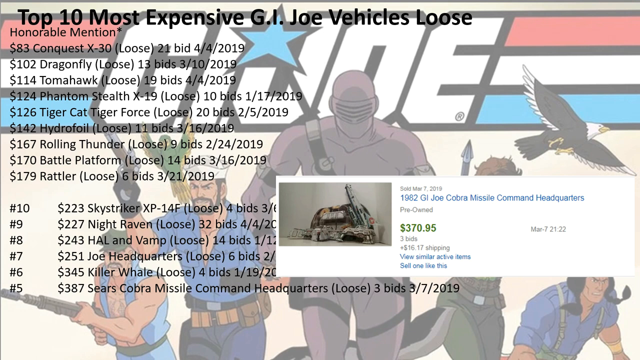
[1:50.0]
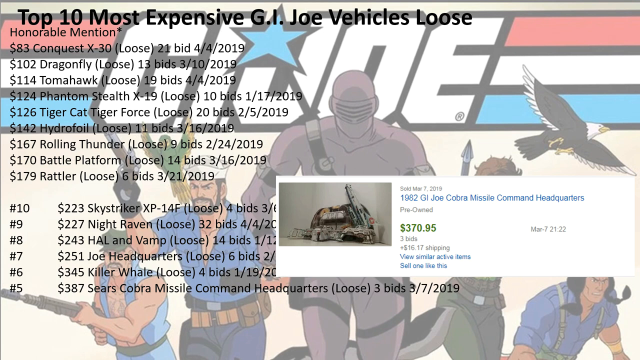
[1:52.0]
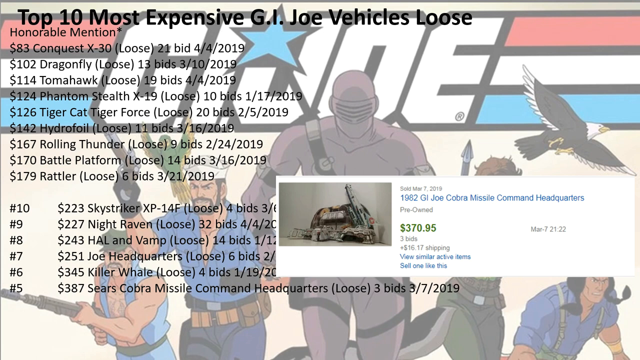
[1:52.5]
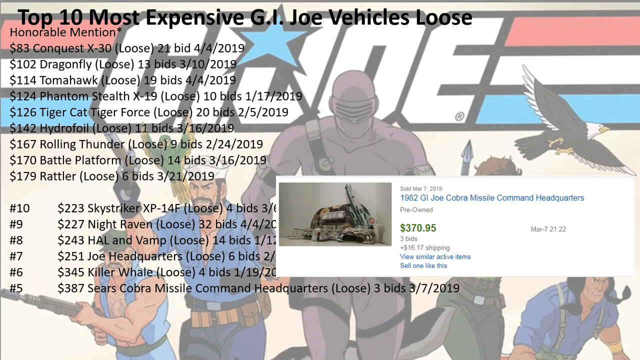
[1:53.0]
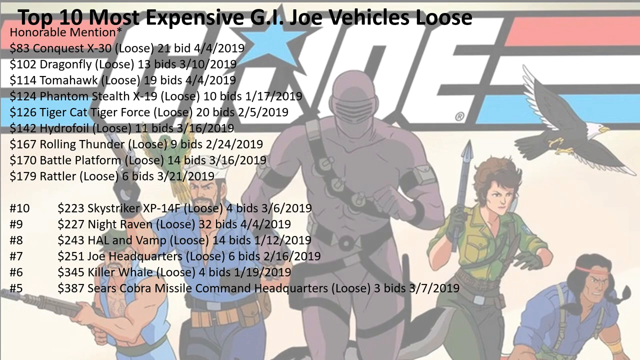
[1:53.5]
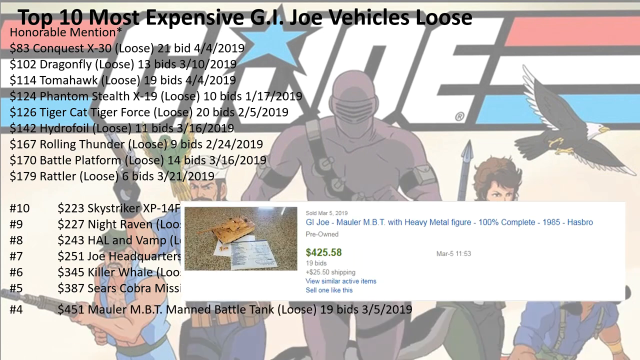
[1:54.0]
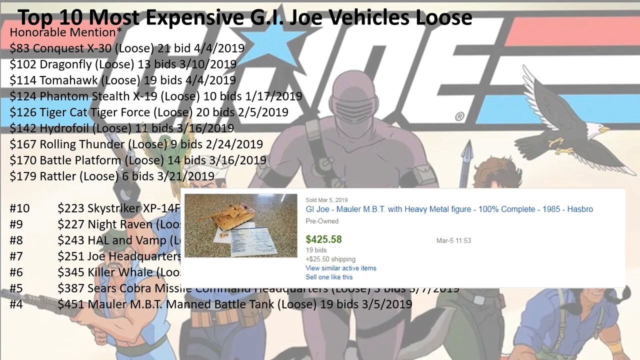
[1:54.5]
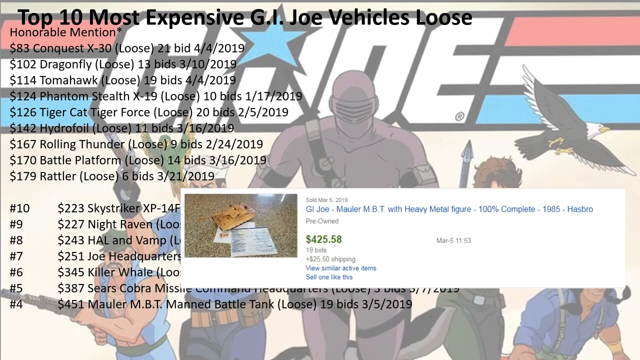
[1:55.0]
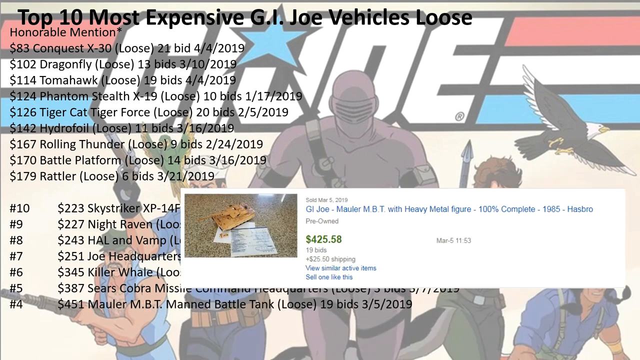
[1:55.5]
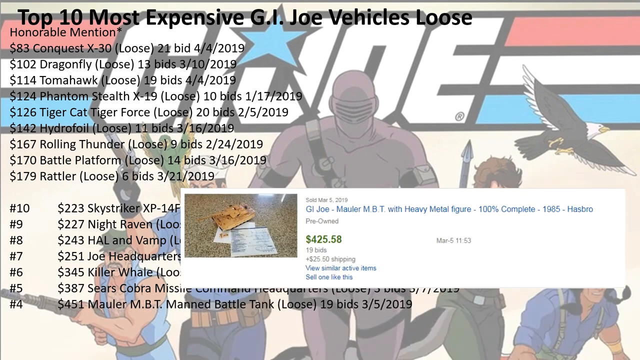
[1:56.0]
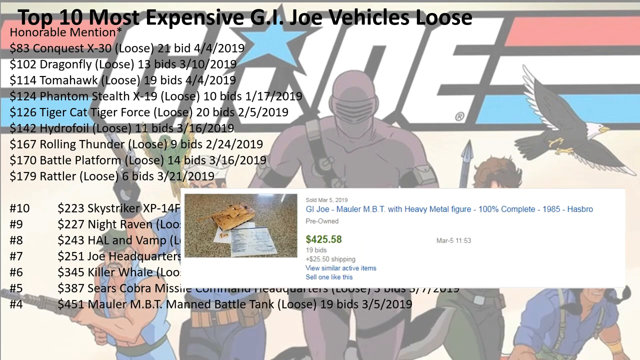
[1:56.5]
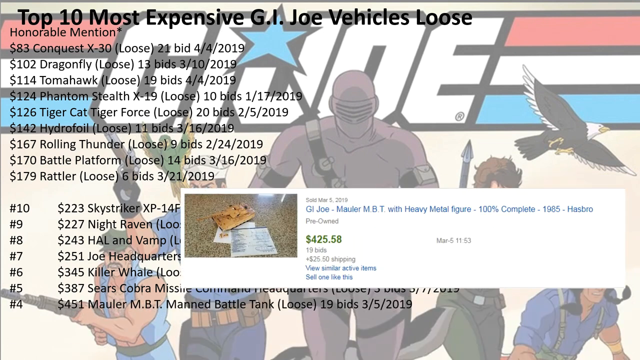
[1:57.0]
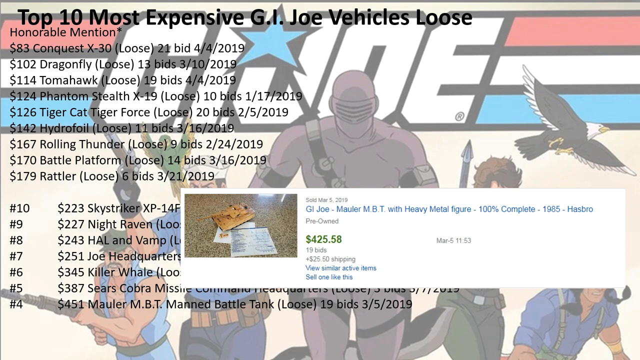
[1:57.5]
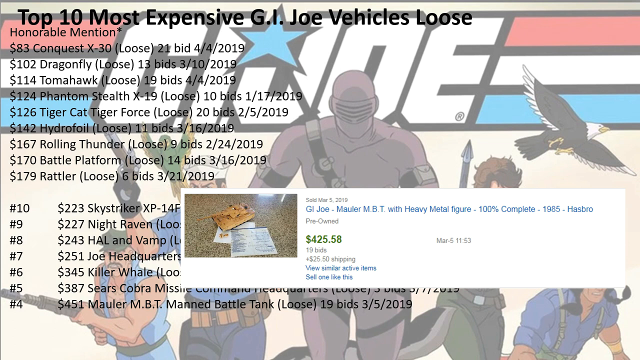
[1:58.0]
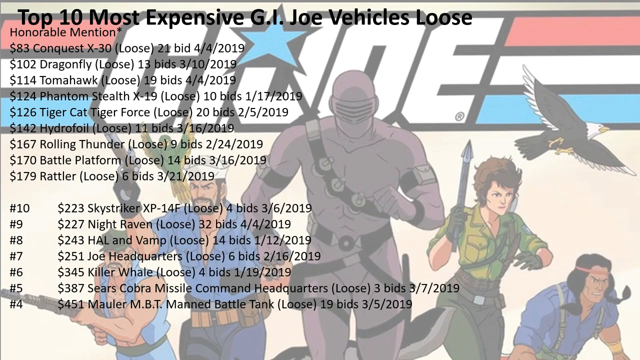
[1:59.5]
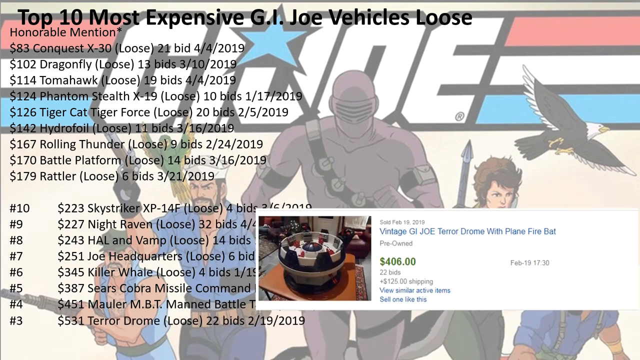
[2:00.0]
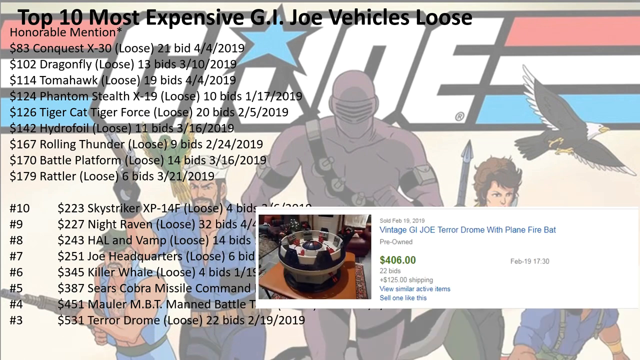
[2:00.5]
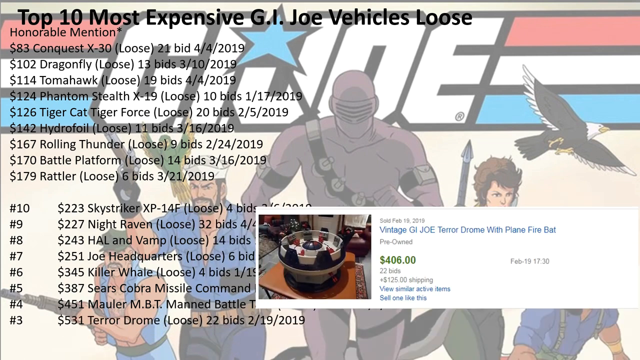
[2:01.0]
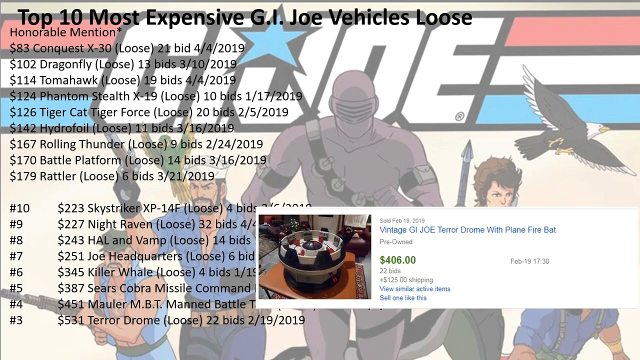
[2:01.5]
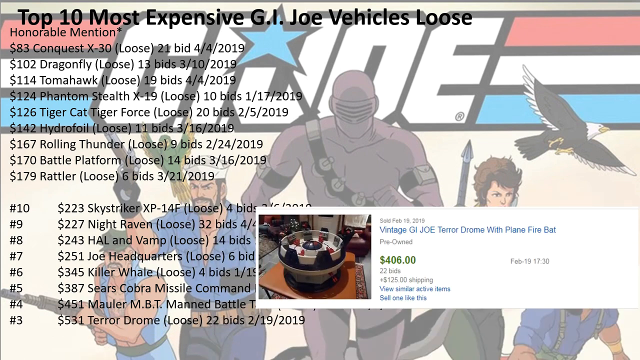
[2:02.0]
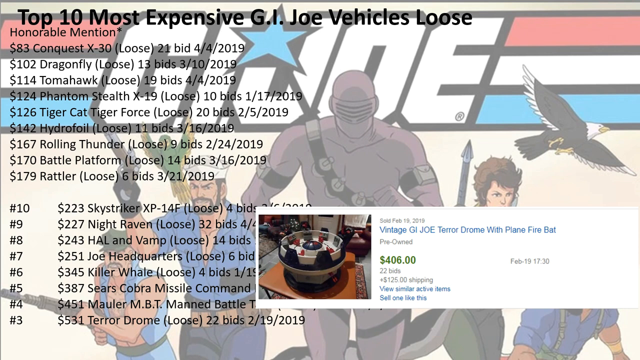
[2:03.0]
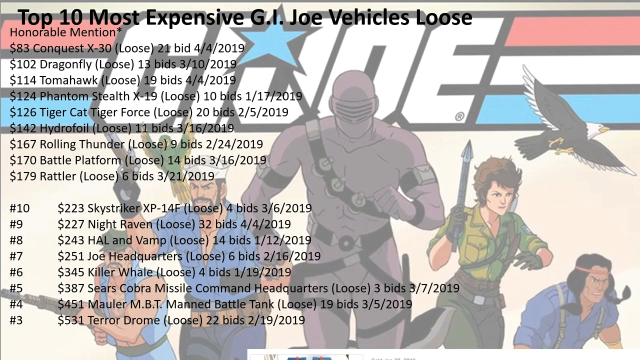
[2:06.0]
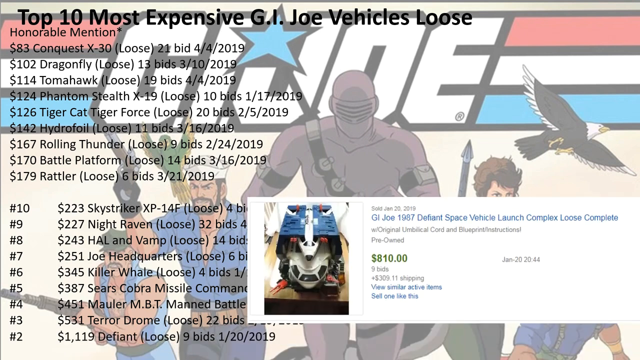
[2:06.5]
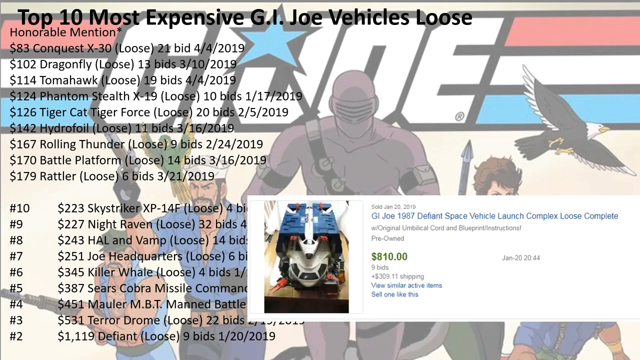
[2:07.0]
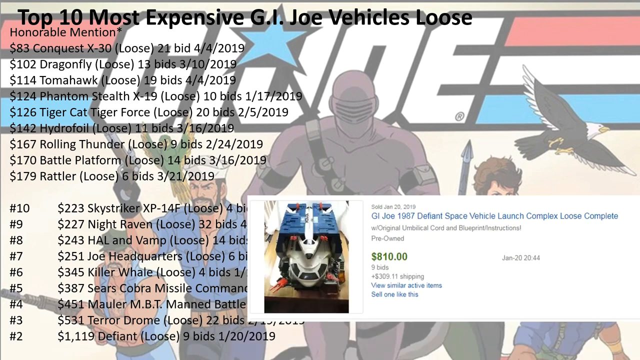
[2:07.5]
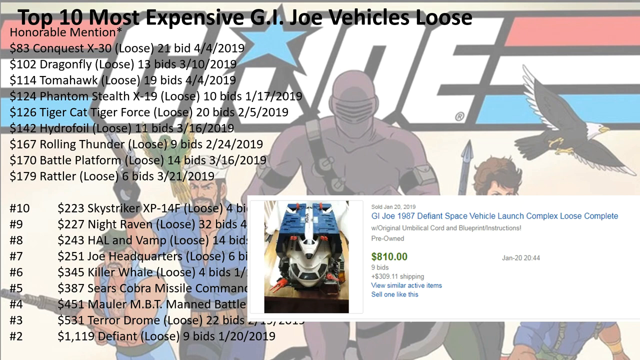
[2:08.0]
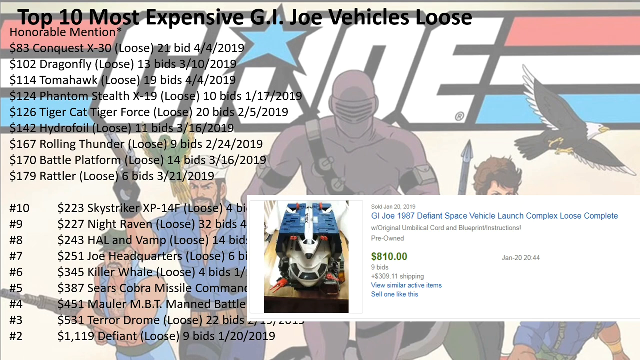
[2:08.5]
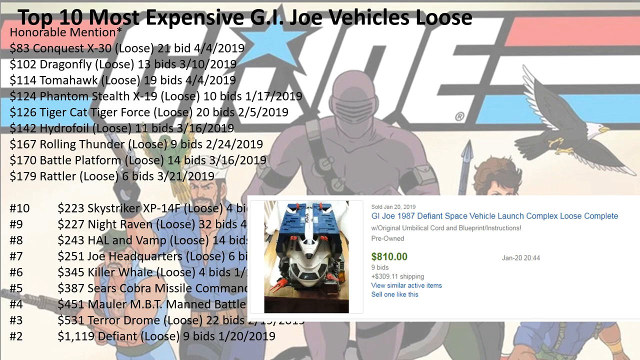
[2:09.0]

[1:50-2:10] The number 5 spot continues, with the listing on the right side of the text. Next is the number 4 spot, the $451 Moeller MBT Manned Battle Tank with 19 bids, sold on March 5, 2019; the listing title is "G.I. Joe Moeller MBT with heavy metal figure, 100% complete, 1985", with a price of $425.58 and another $25.50 in shipping. A small yellowish tank is visible with some paperwork right below it. The number 3 spot is the $531 Terror Drome with 32 bids, sold on February 19, 2019, titled "Vintage G.I. Joe Terror Drome with plain firebat", at $406 plus $125 in shipping. Then comes the number 2 spot, the $1,119 Defiant with 9 bids, sold on January 20, 2019, titled "G.I. Joe 1985 Defiant Space Vehicle Launch Complex, loose, complete", with a price of $810 and $309.11 in shipping.